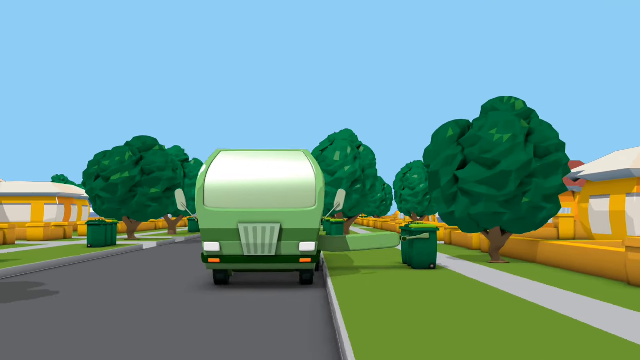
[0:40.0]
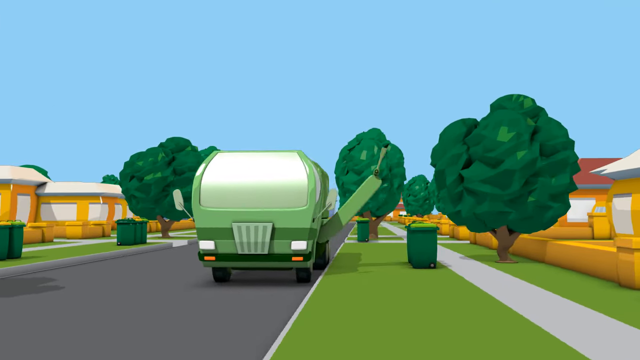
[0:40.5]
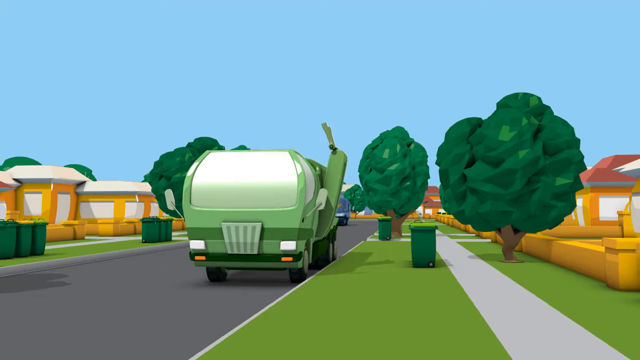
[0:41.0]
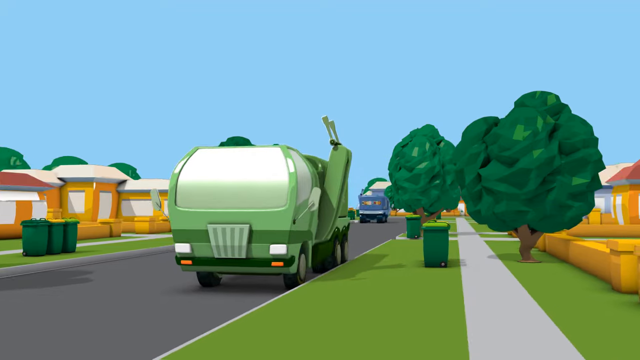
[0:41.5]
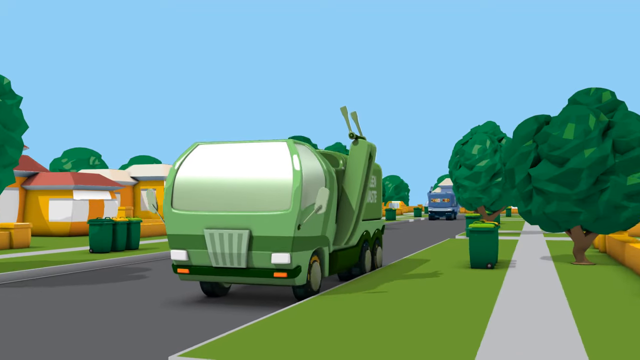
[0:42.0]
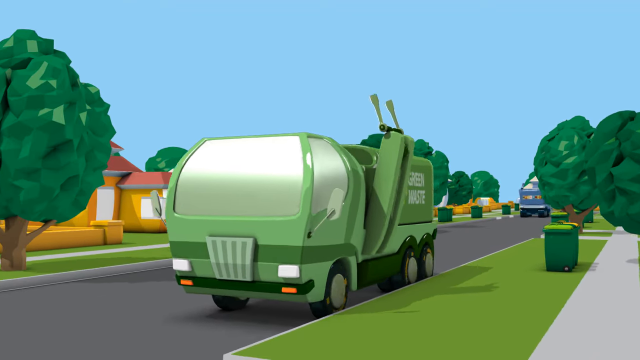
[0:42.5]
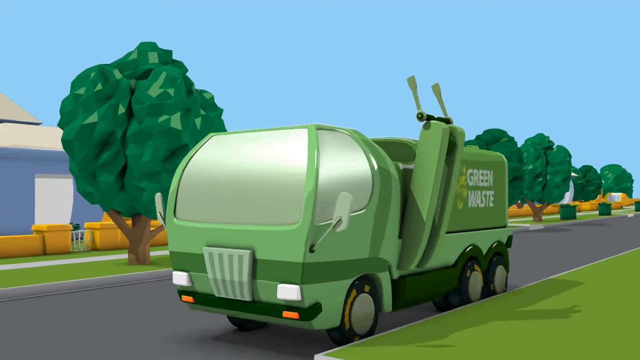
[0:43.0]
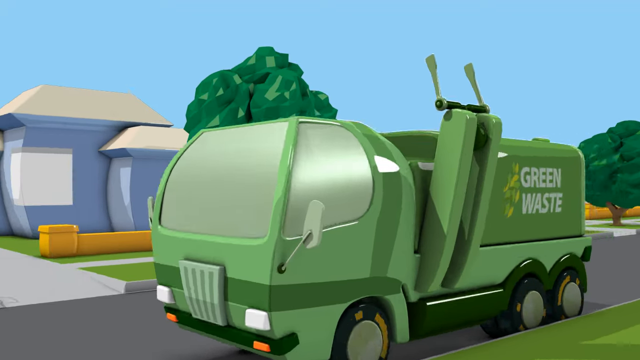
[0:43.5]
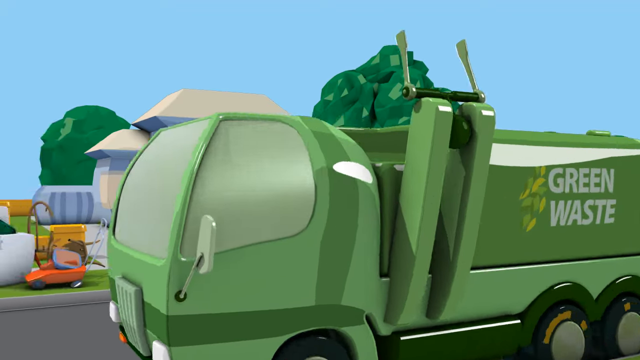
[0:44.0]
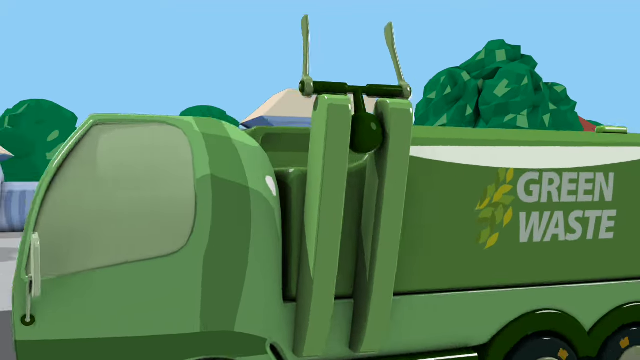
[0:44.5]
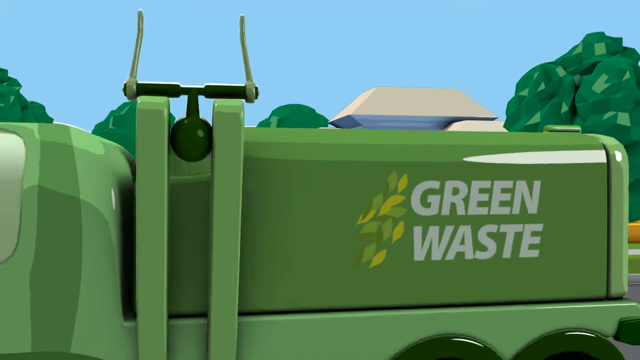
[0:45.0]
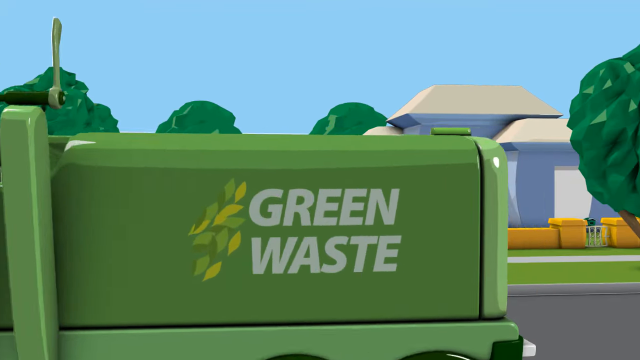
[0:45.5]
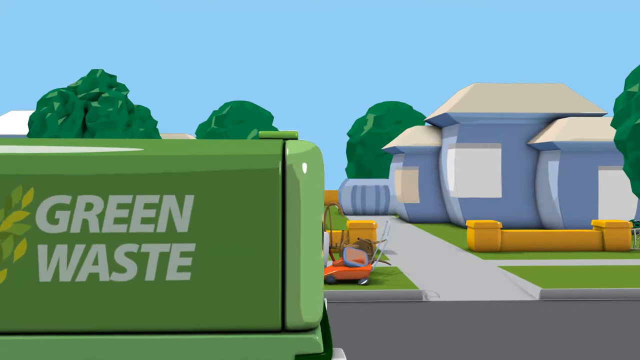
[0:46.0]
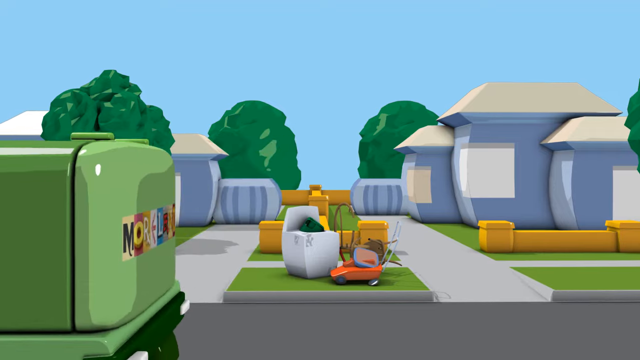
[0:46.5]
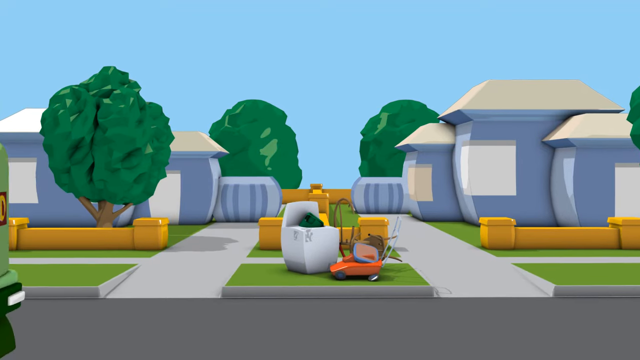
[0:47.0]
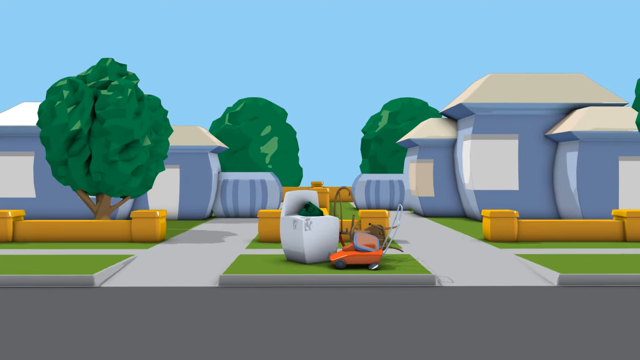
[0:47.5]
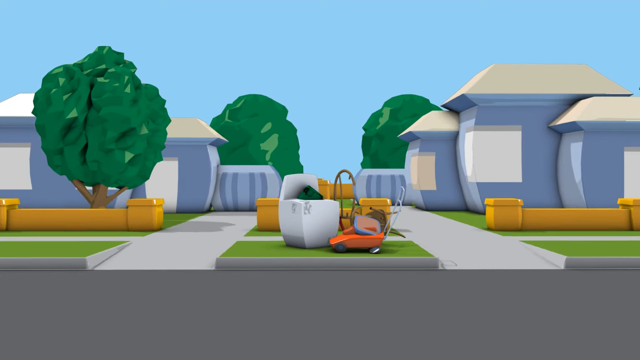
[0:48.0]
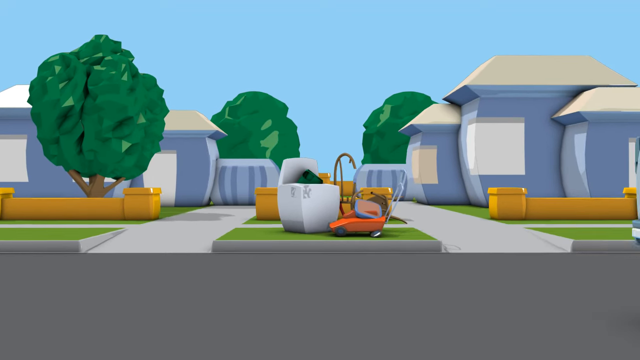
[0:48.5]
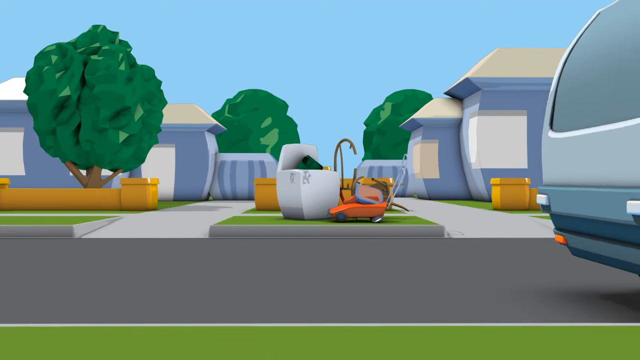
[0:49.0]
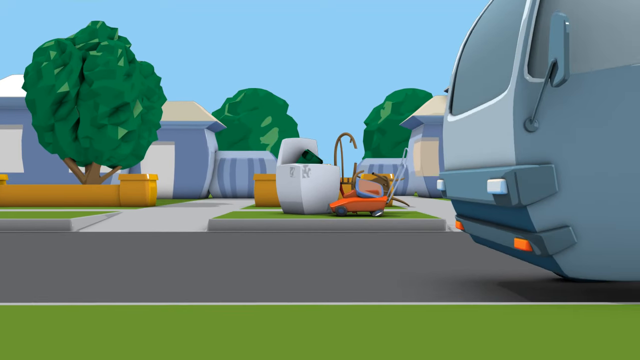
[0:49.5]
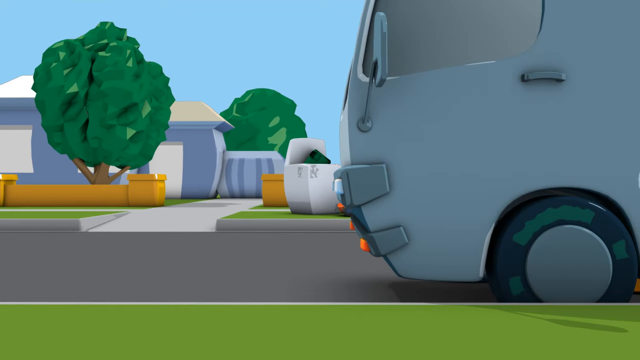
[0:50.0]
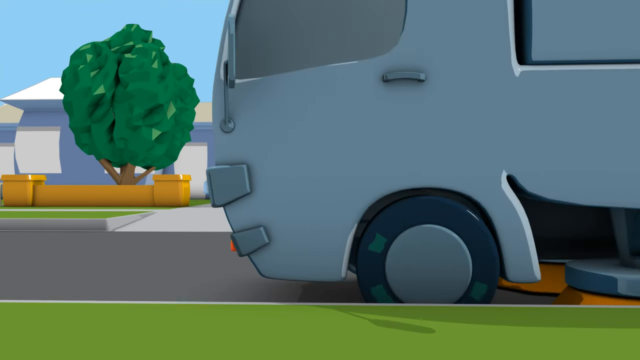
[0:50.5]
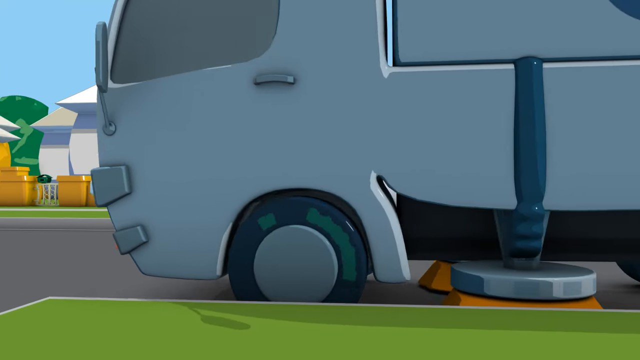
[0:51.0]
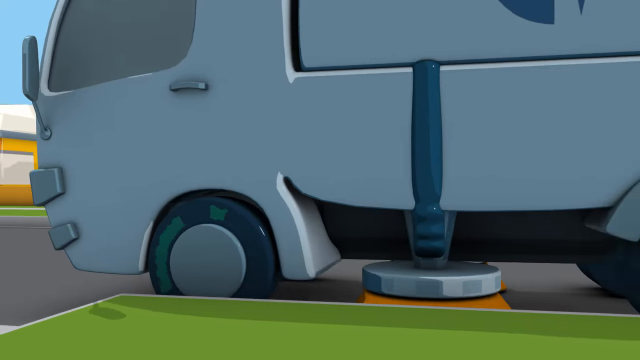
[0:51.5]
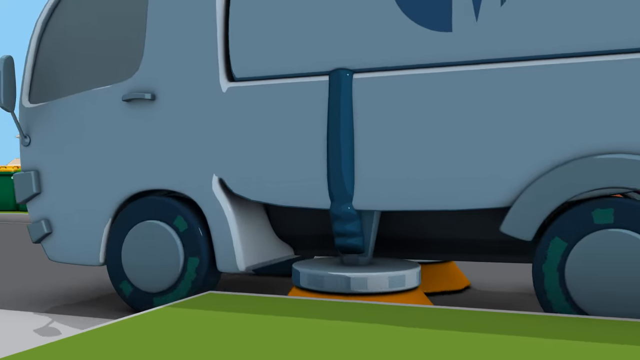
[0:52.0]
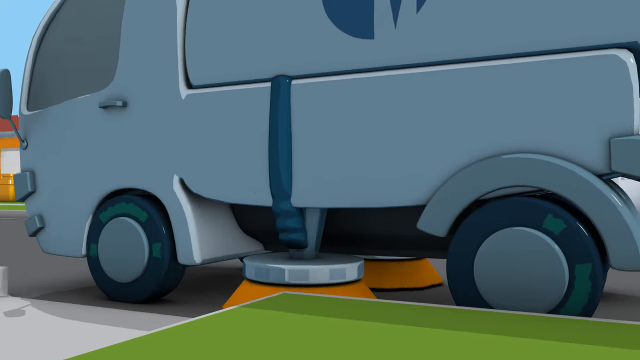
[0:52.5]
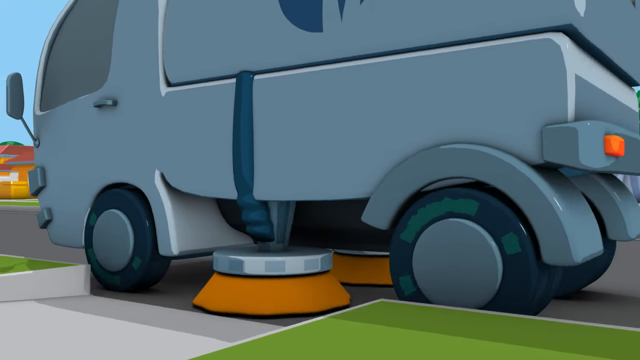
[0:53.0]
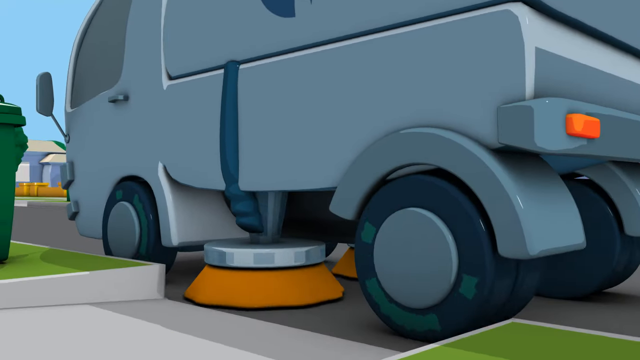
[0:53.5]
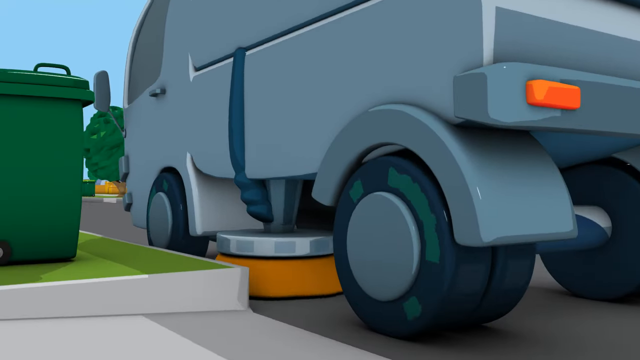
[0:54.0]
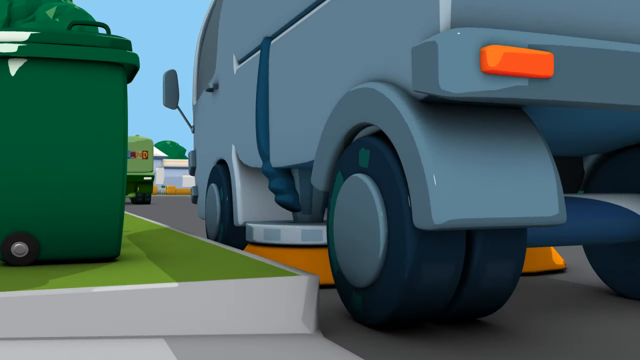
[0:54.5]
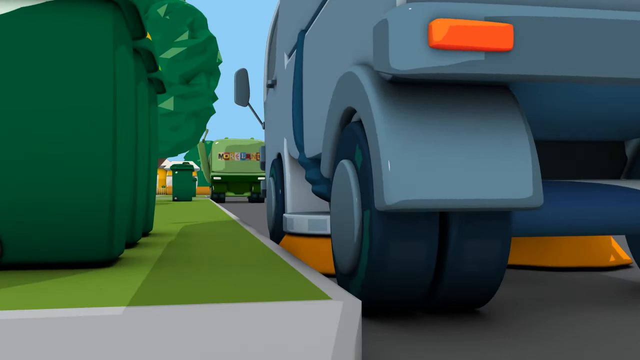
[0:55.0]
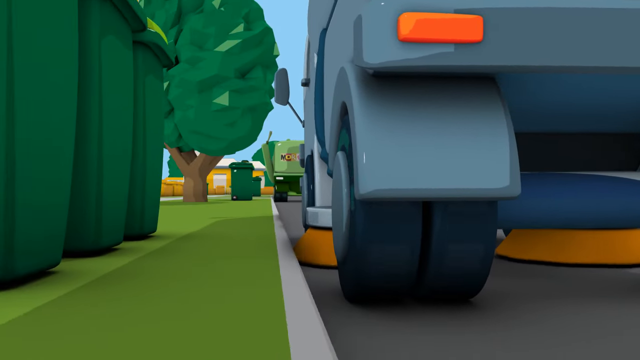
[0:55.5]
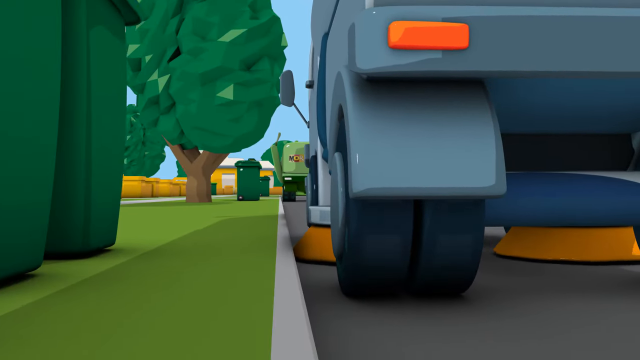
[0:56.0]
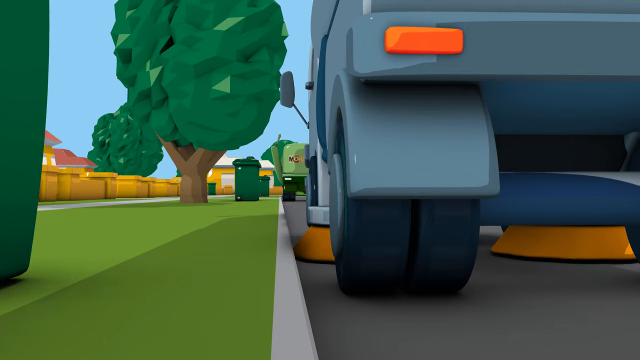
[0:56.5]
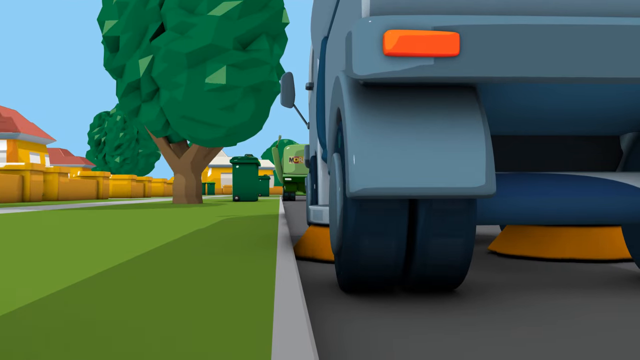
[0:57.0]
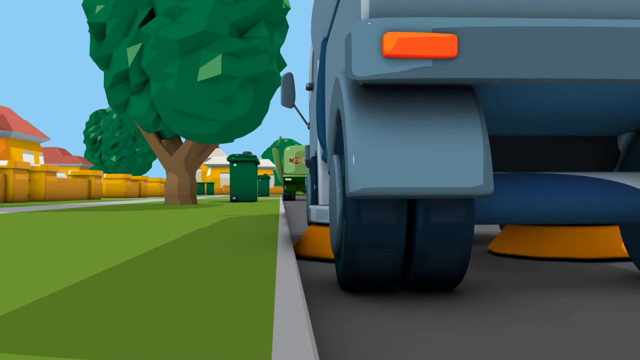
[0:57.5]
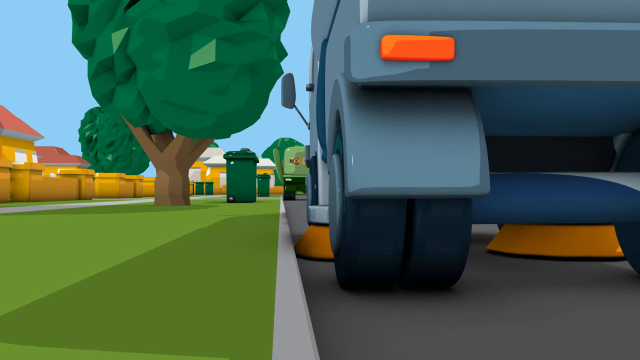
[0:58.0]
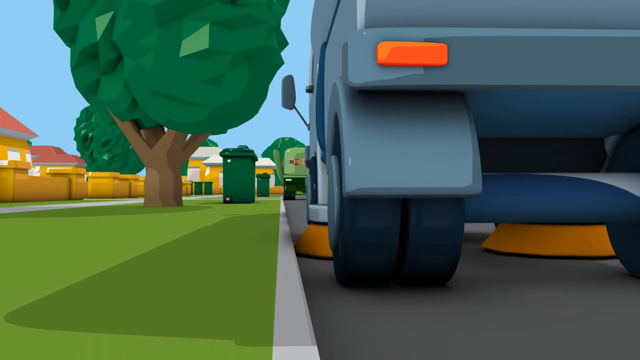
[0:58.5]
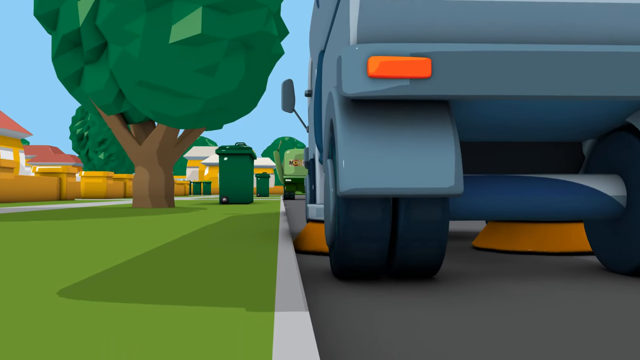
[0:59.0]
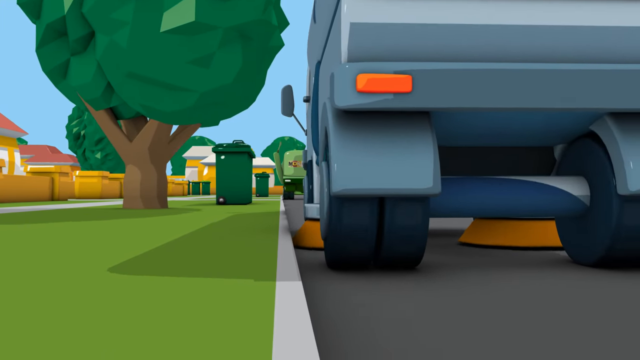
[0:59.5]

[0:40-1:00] A front view of the green garbage truck appears, with the yellow houses and many trees behind it and a clear blue sky with no clouds above. The truck drives to the next house and picks up the waste bin with the yellow top. Behind it is another truck, light blue, doing street sweeping, and the view kind of focuses on the bottom of that truck where the sweeping happens. The trucks are shown working together to pick up all the waste in the residential area. Behind one house, a lot of goods have been left out, probably for a used-goods pickup where people can recycle.